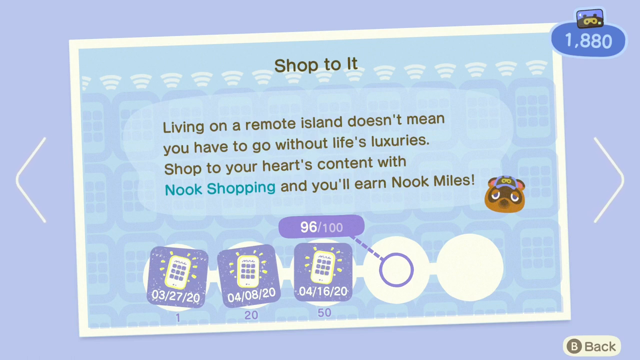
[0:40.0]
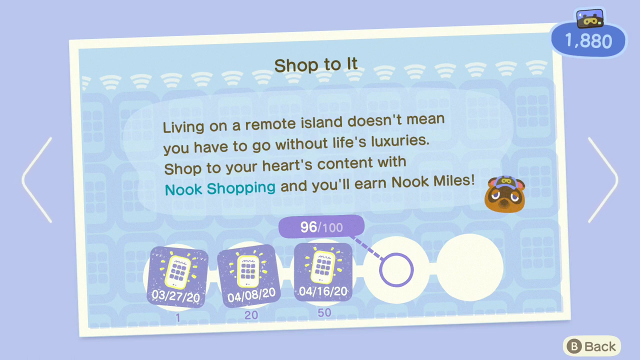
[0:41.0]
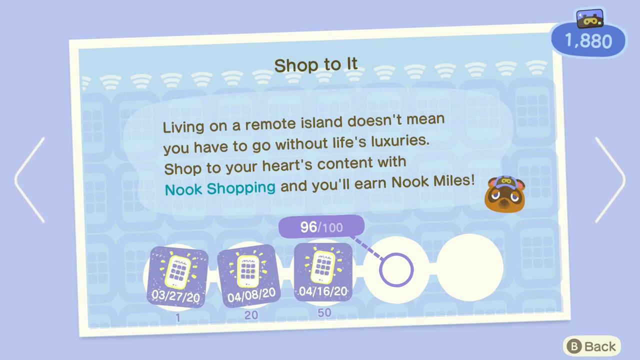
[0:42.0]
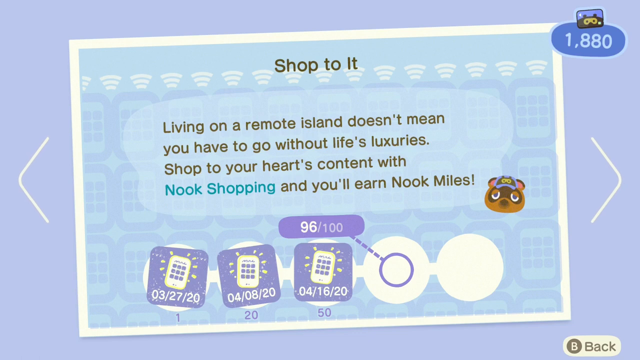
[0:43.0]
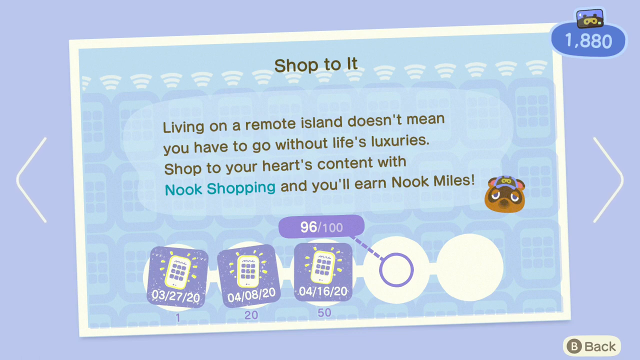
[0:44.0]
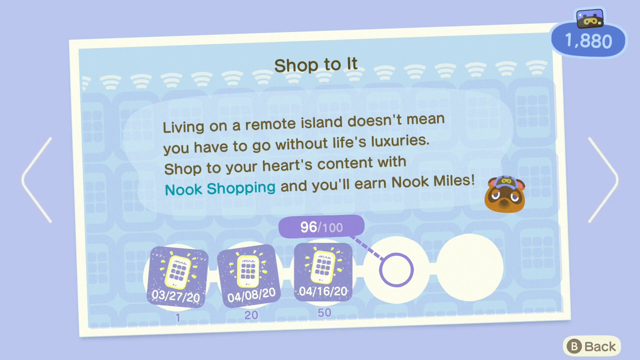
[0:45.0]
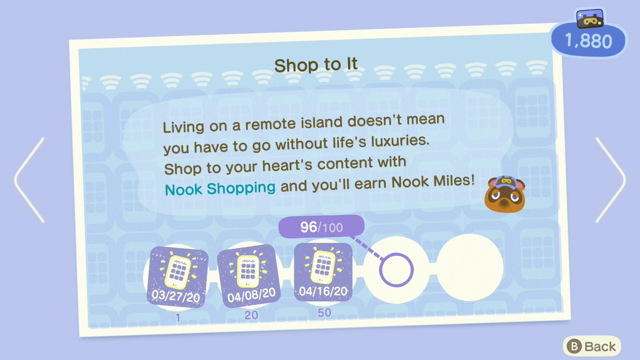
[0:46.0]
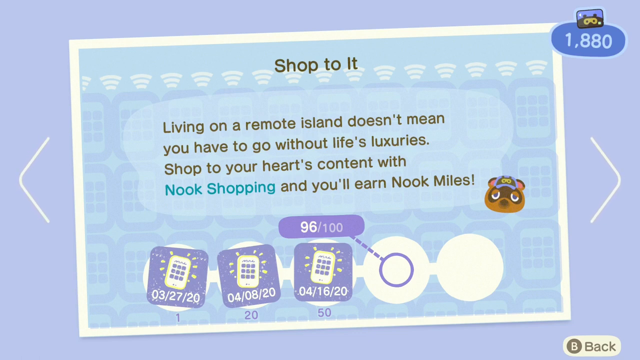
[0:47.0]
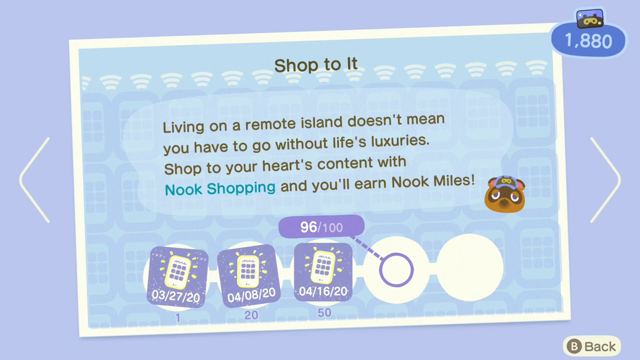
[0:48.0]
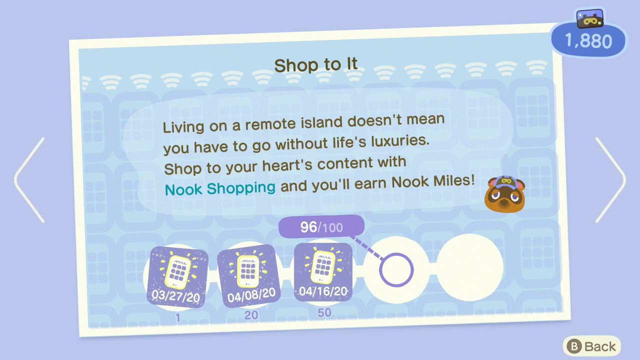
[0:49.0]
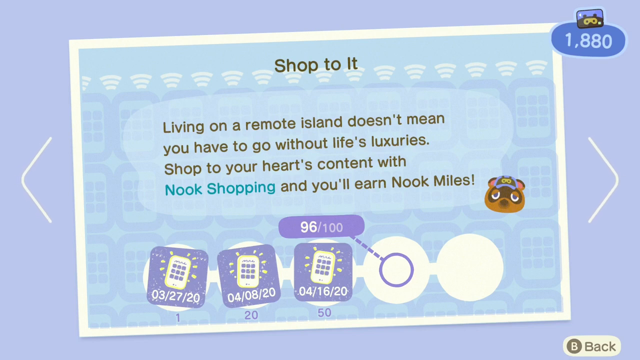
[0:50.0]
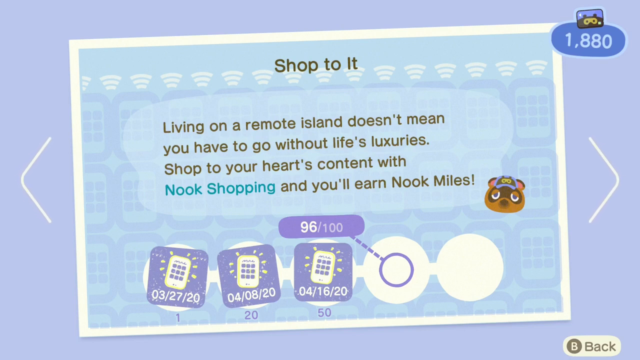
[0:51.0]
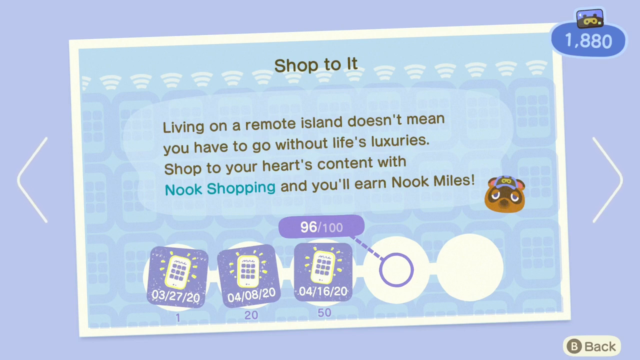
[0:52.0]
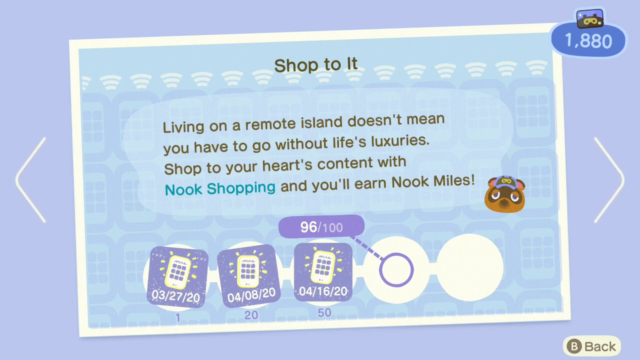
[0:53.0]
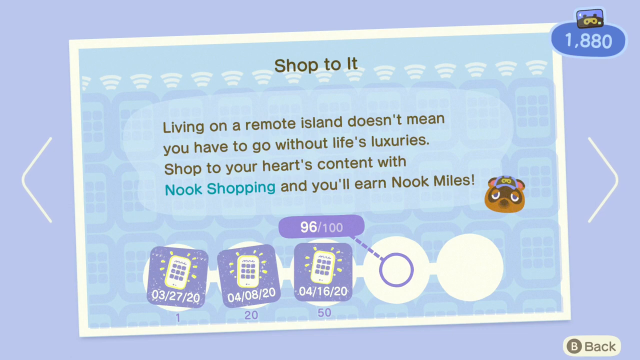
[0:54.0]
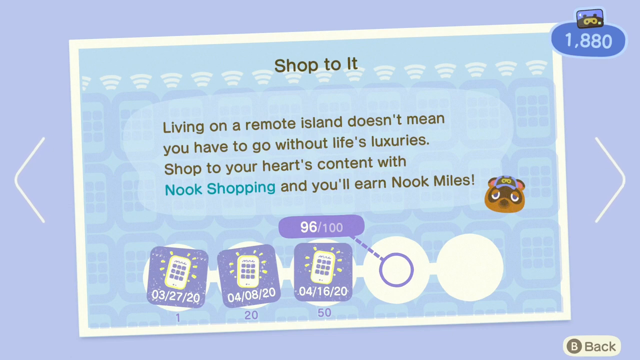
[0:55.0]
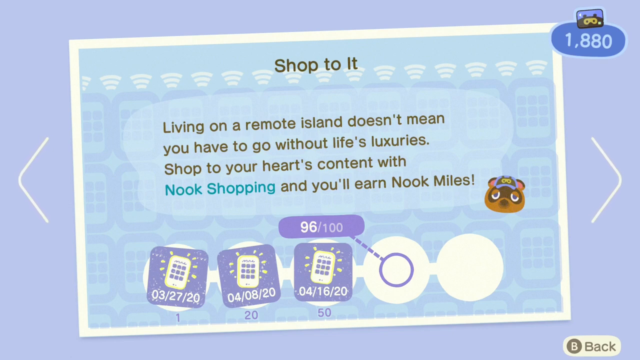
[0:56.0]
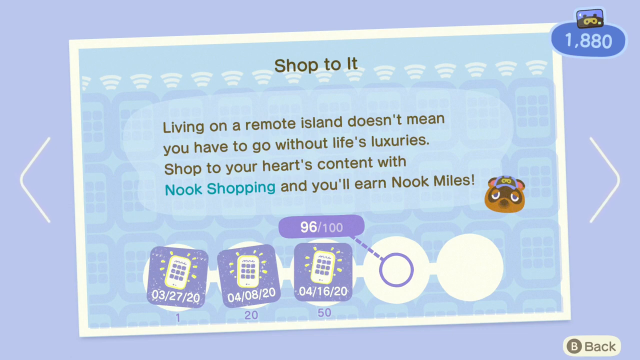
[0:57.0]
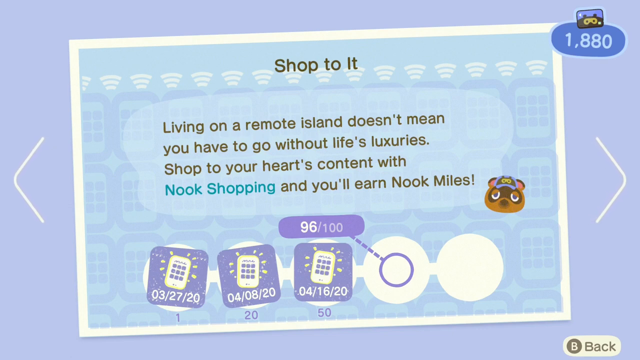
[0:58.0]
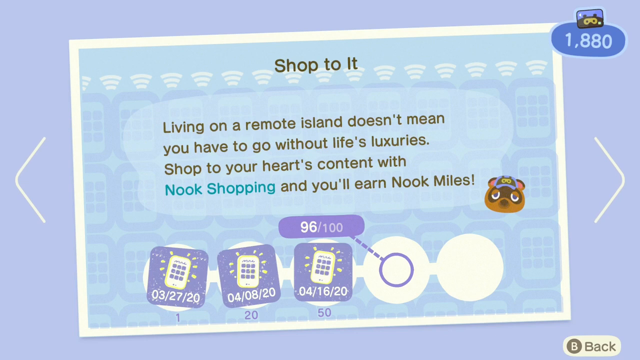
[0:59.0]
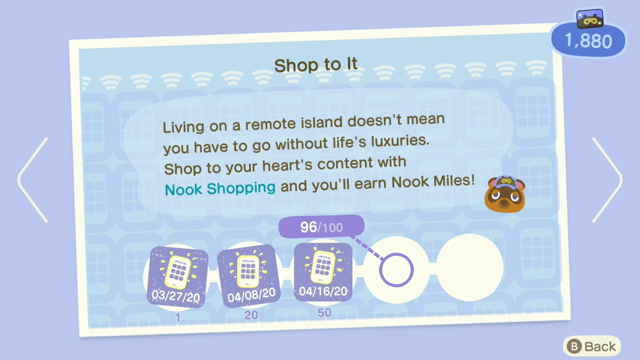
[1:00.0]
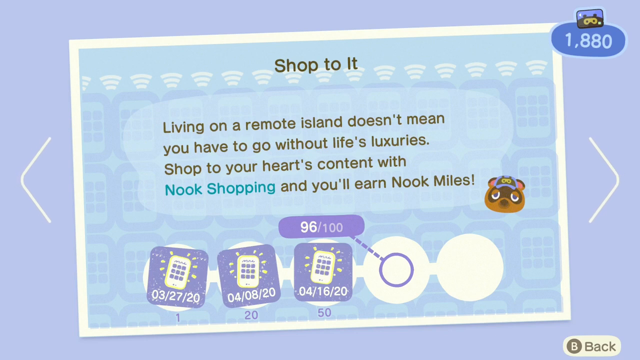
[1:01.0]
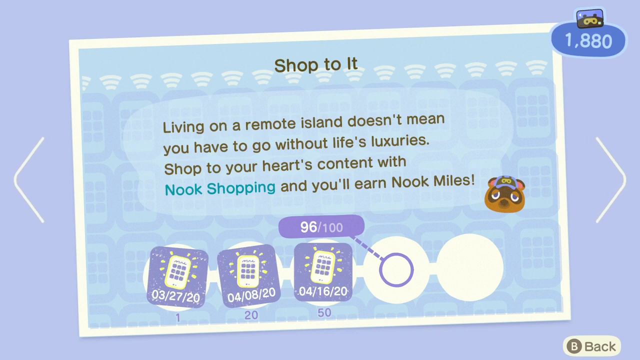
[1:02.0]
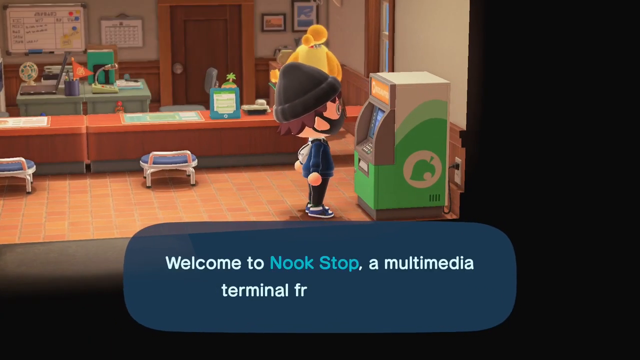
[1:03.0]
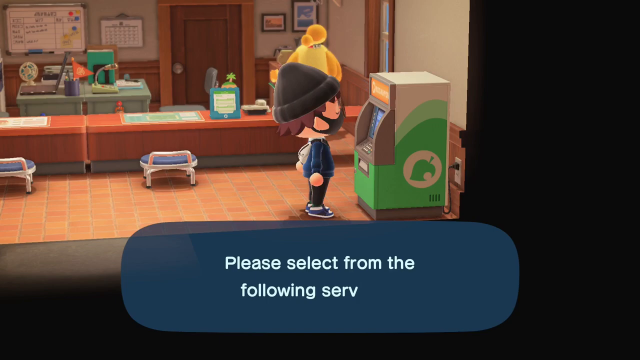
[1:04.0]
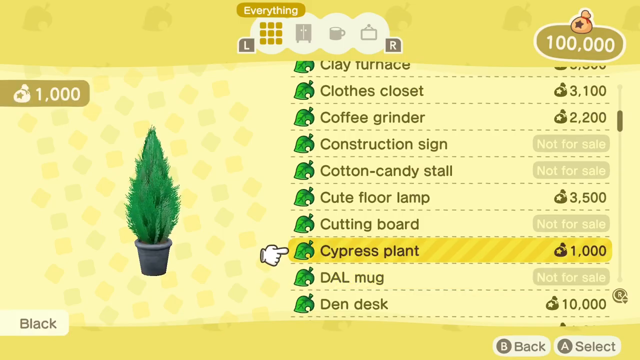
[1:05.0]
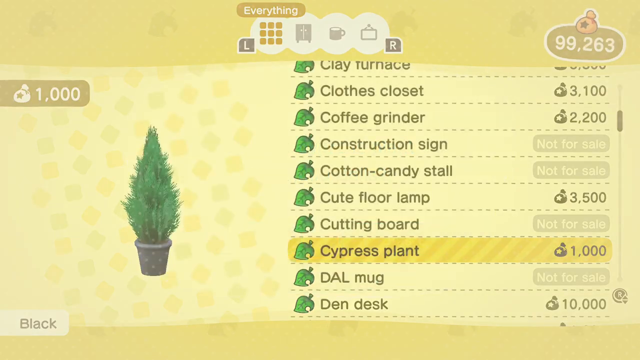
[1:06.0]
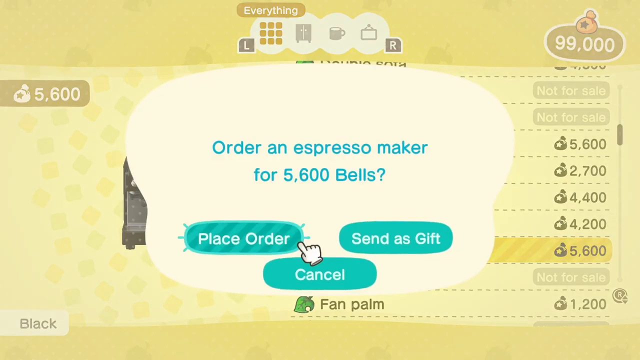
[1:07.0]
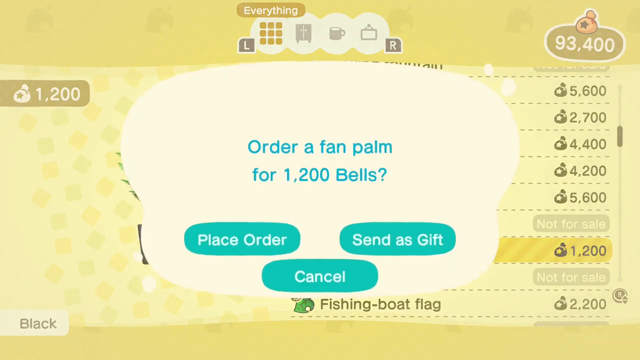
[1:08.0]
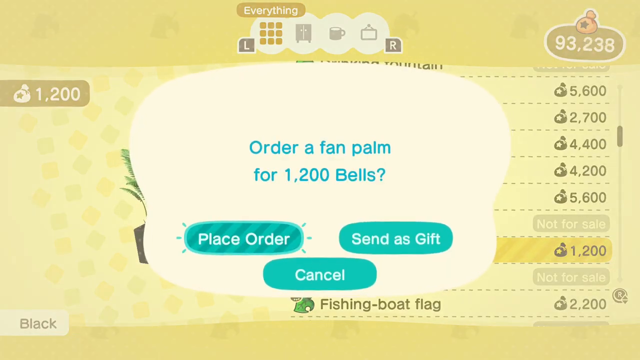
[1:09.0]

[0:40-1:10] Arrows on the left and right sides of the Shop To It display can be pressed to go to other categories and achievements, and they pulse slightly up and down. The category is displayed as a letter on the screen, with gray text on top of it. White decorative parts are on top of the letter and in the background of the text, and it is surrounded by a large white border. The player then redeems a thousand bells to order a cypress plant, and also orders an espresso maker and a plant. Other items for sale in the store include a drink machine, a drinking fountain and a famous painting. Each time the player places an order, a prompt asks them to confirm it, and afterwards a popup confirms the order was placed.